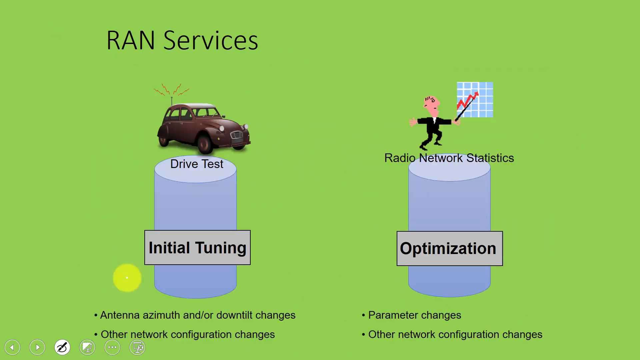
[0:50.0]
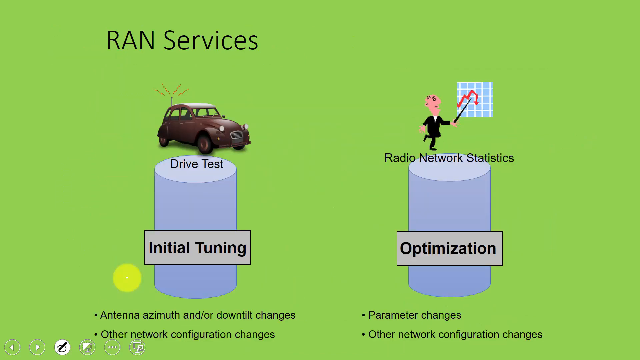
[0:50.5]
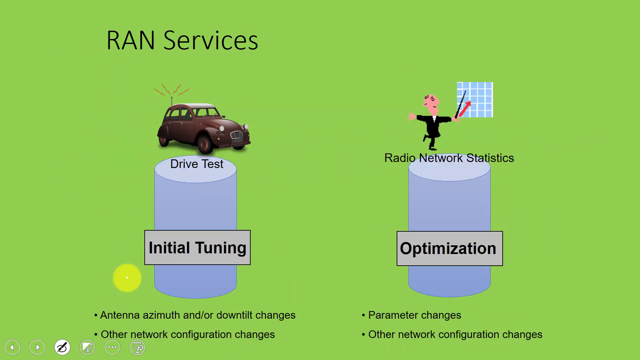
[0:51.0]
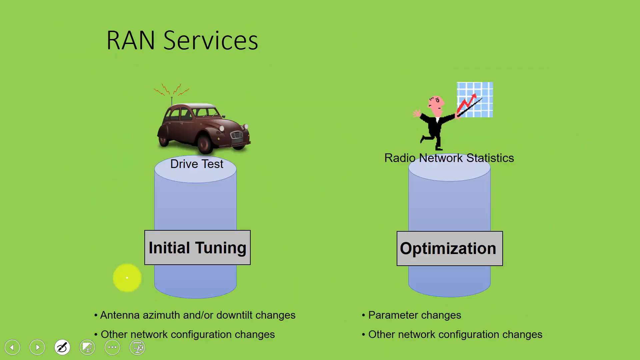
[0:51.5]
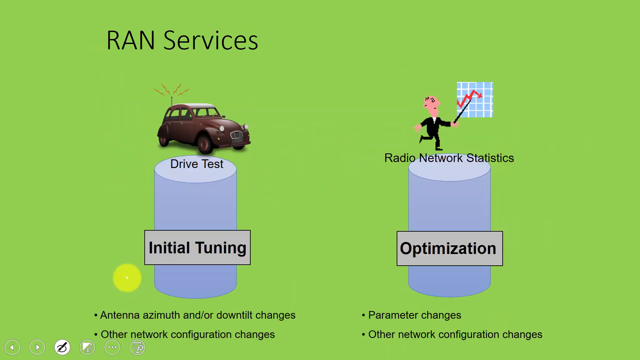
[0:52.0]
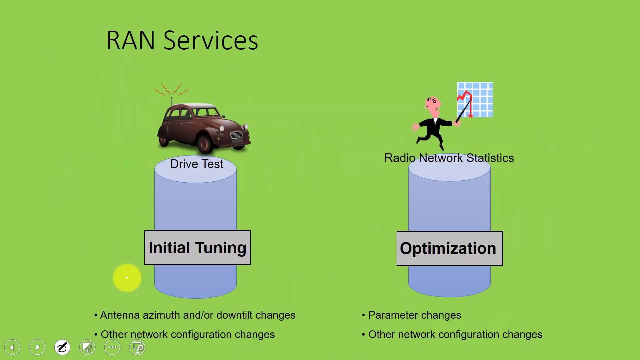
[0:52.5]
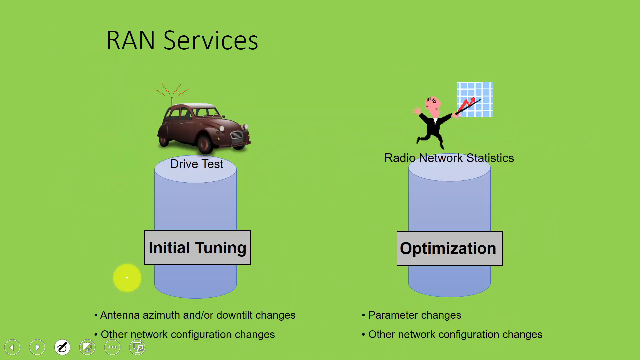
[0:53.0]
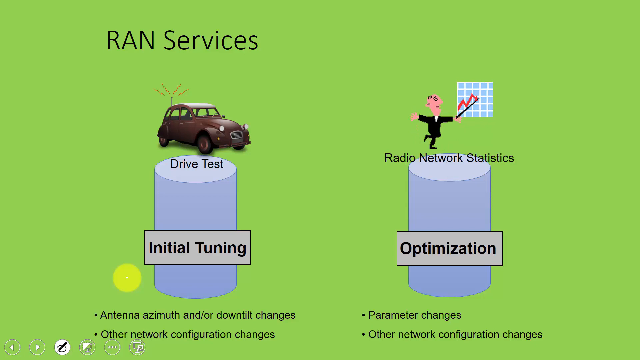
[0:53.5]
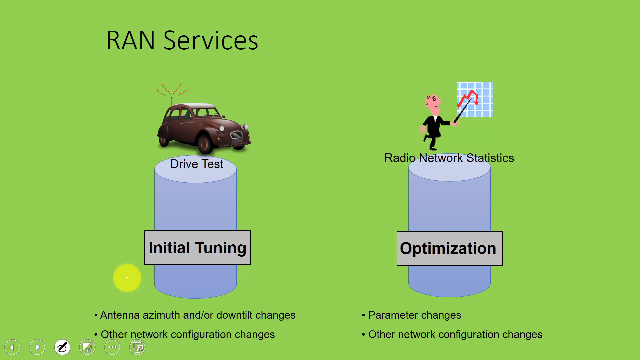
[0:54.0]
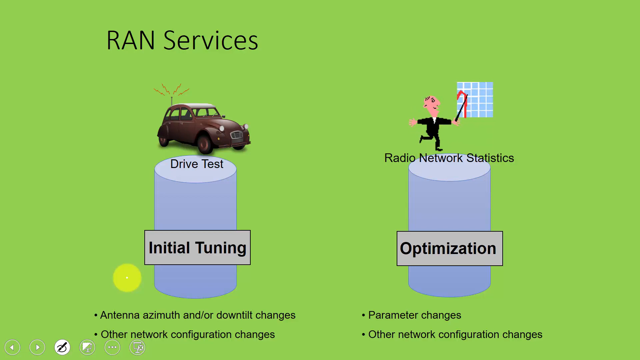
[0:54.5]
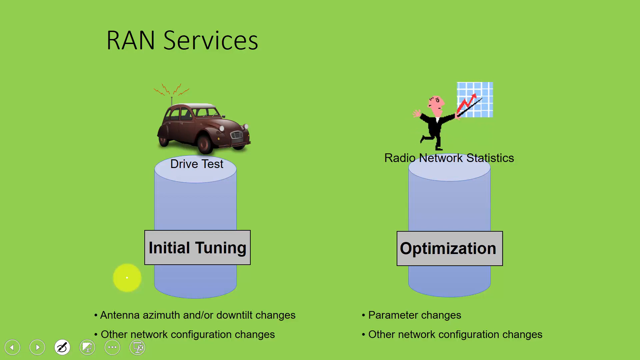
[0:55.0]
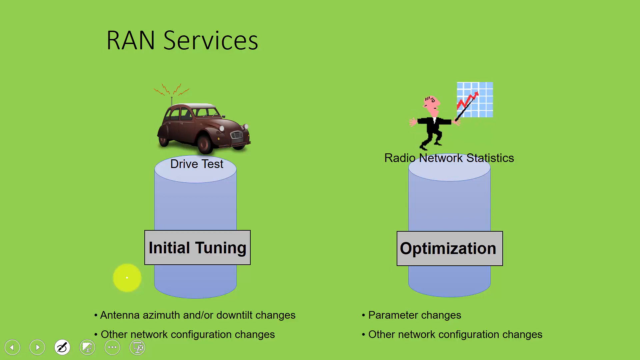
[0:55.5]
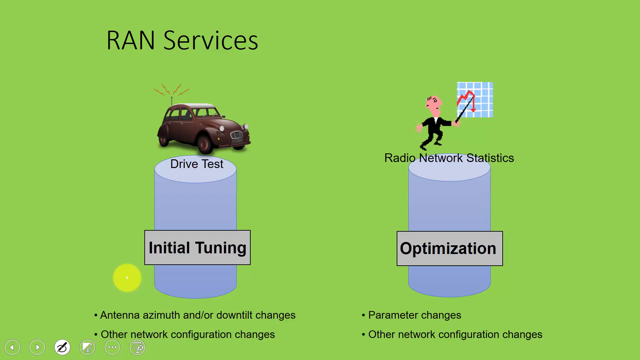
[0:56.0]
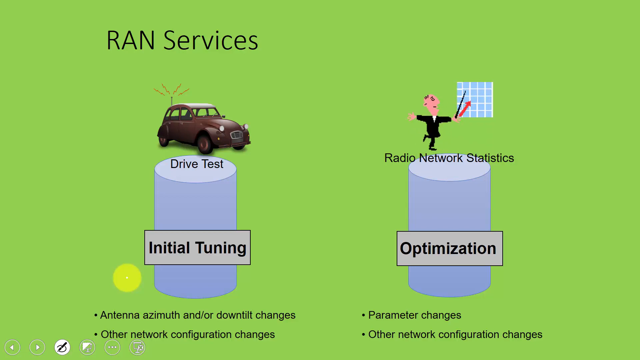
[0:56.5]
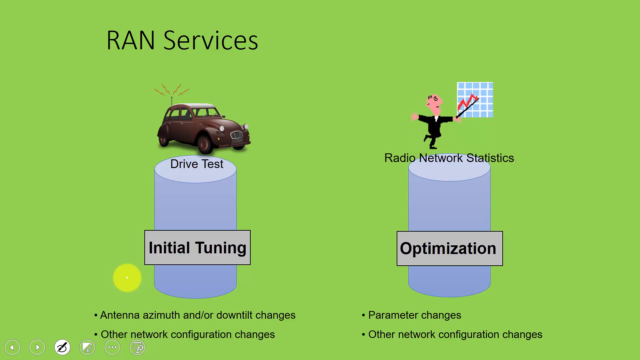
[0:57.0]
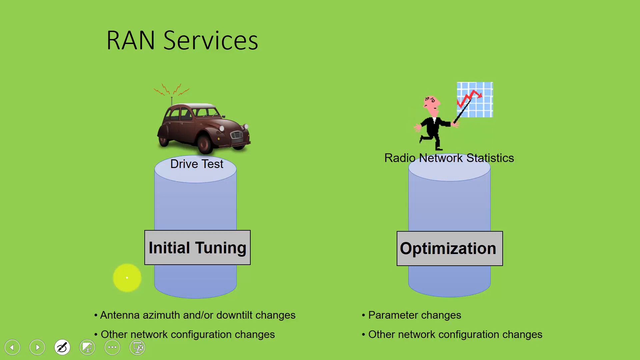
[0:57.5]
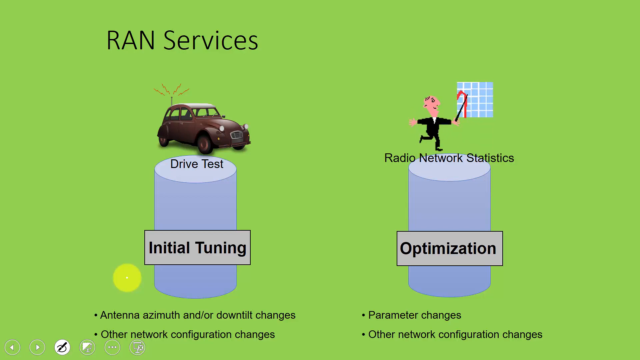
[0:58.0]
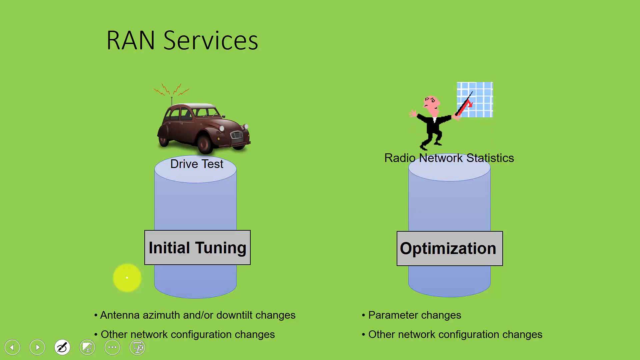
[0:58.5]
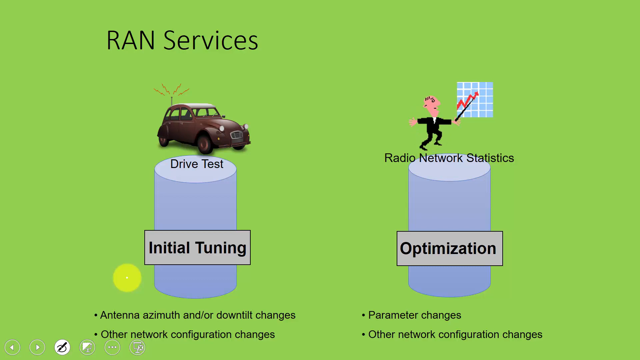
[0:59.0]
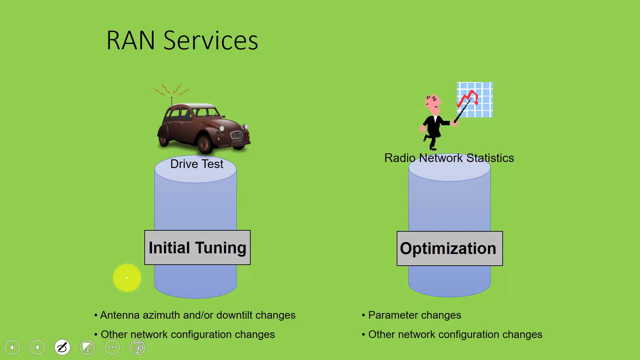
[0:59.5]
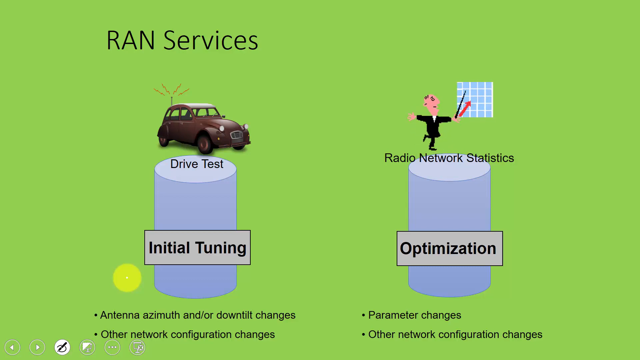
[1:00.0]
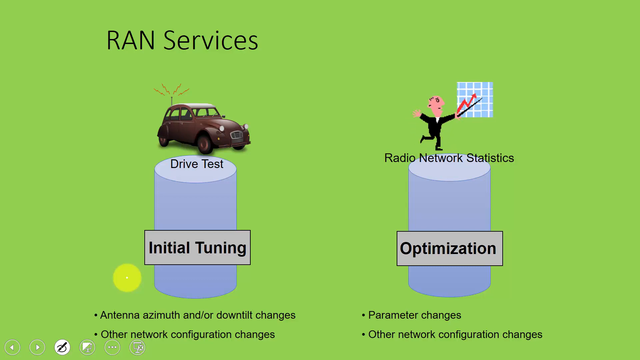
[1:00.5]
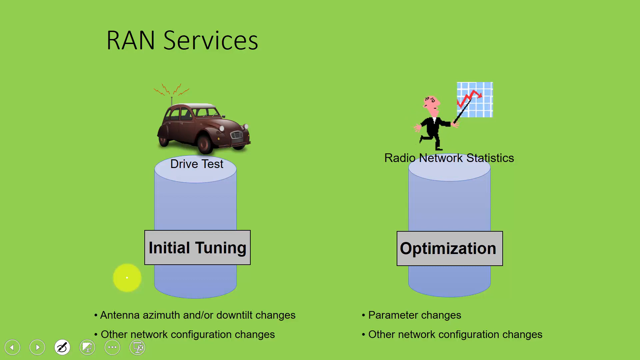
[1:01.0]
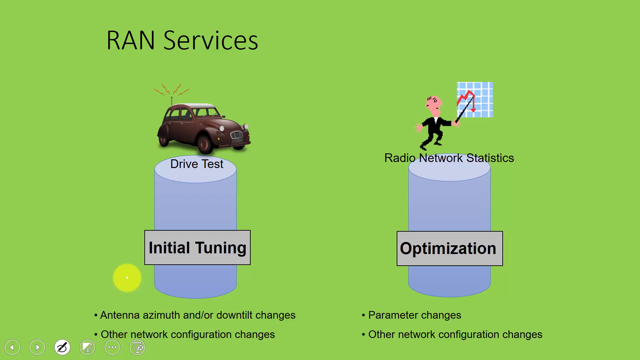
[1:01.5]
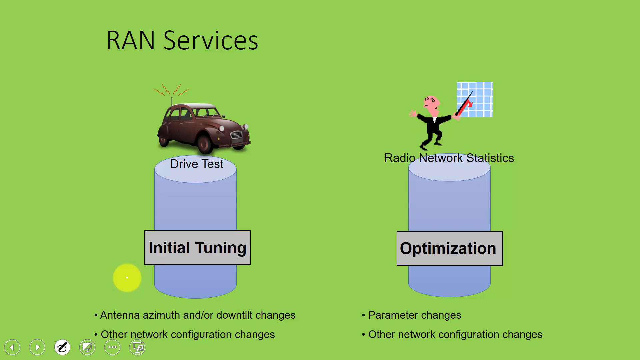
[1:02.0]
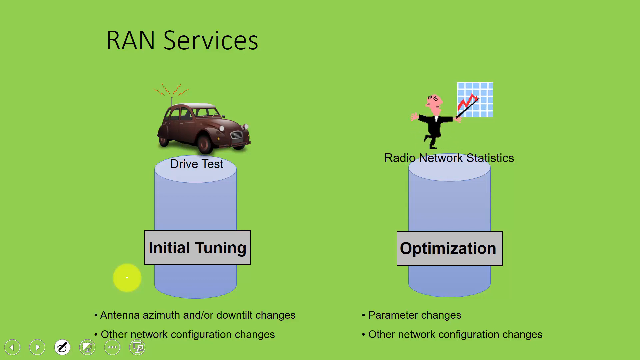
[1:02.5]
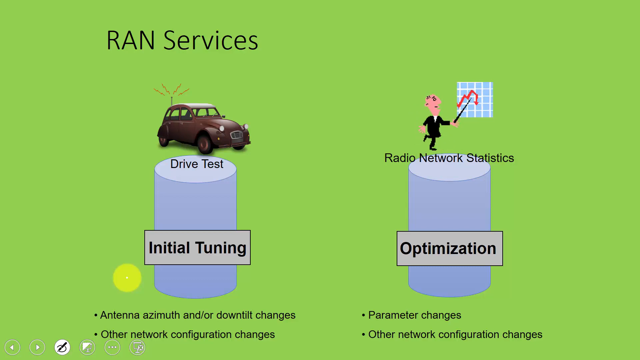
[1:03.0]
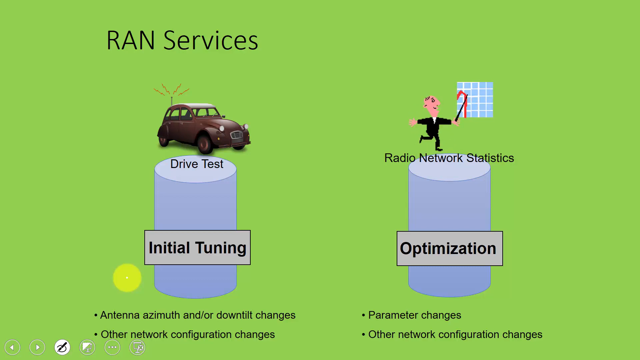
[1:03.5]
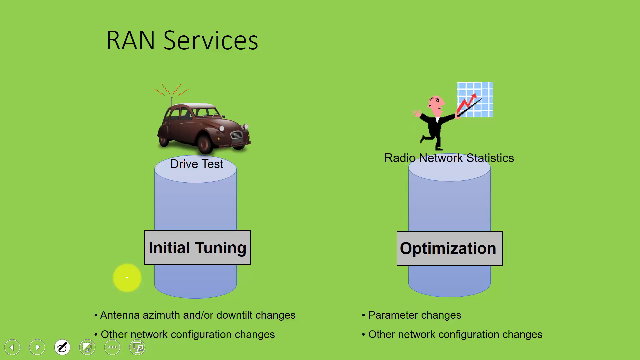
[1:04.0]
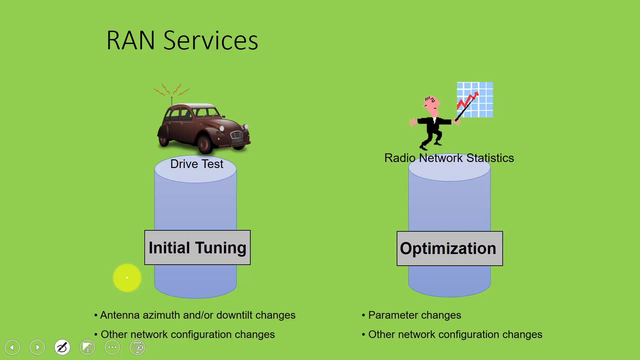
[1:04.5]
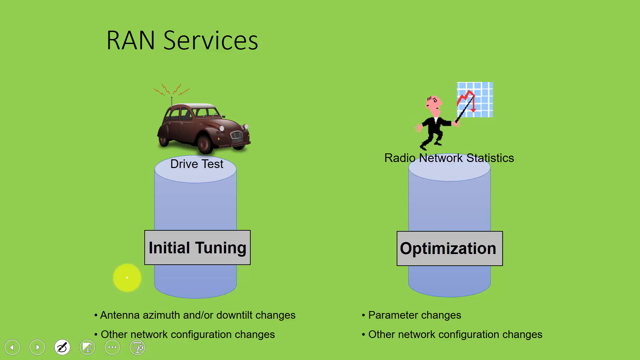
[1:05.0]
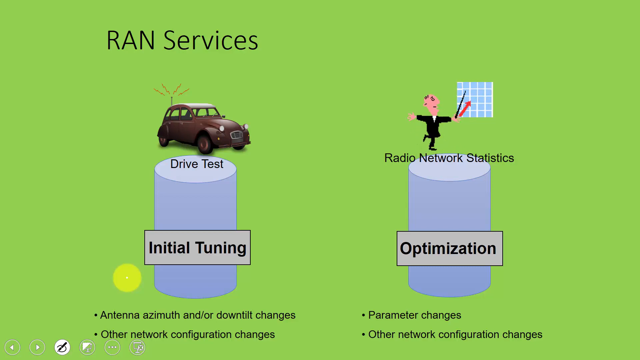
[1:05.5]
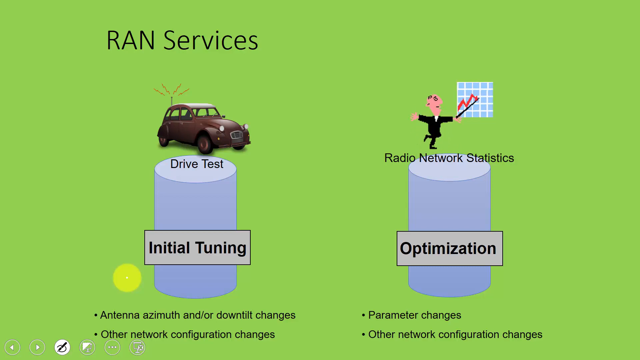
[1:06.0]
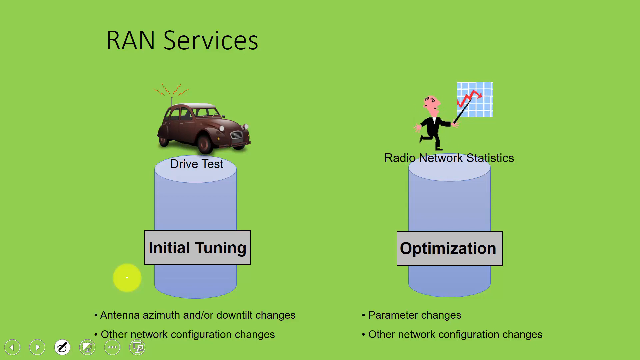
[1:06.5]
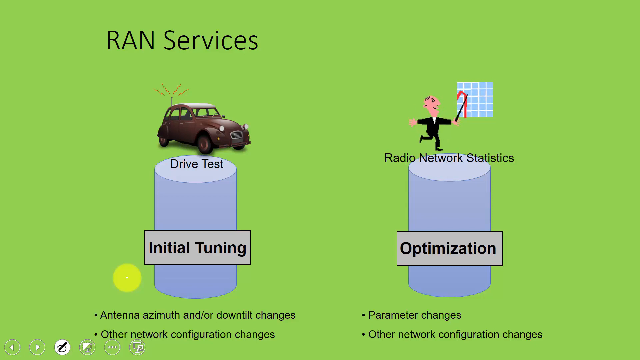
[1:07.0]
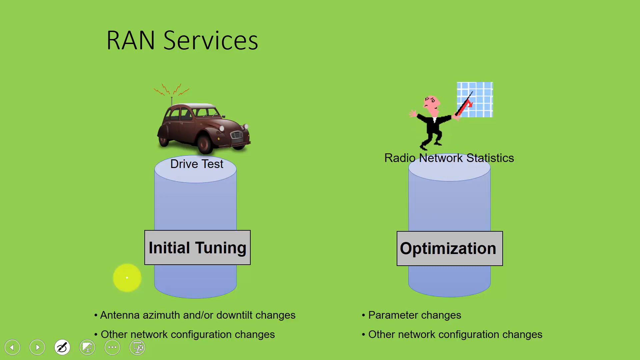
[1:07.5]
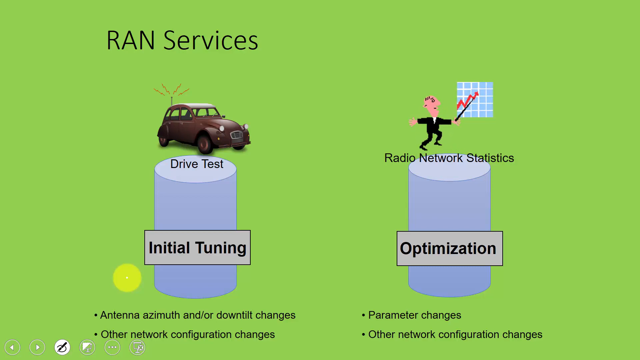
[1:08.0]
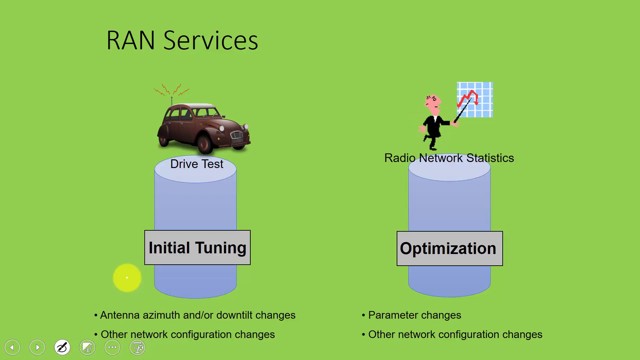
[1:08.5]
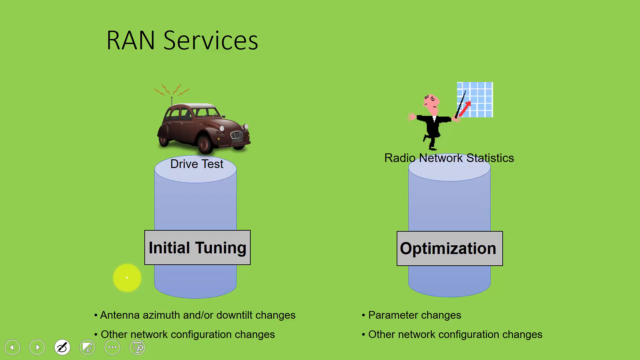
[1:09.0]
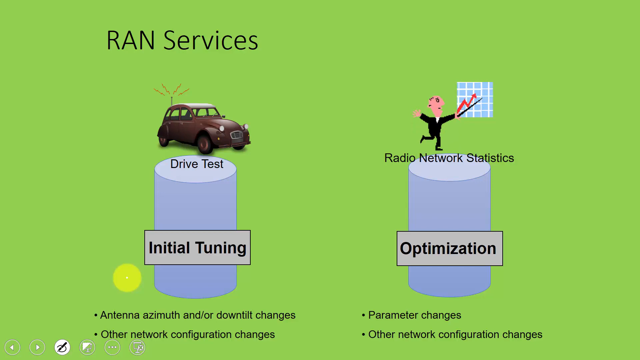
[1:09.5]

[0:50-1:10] The same slide stays up the whole time, with one animation. It has a green background and a small lighter green circle below the left column, which is a cylindrical gray column labeled initial tuning. It shows "drive test" with an icon of a red car that looks like a standard SUV of an unidentified brand, with lightning-bolt-like marks, apparently representing a signal, coming out of an antenna on the back. The other gray column lists "antenna azimuth and or down tilt changes" and "other network configuration changes" below it. The right-hand column is titled optimization, with "radio network statistics" above it and a small cartoon icon of a man in a business suit, apparently using a laser pointer, drawing a graph behind him that rises jaggedly and then suddenly drops off. The animation repeats over and over. Underneath are "parameter changes" and "other network configuration changes".